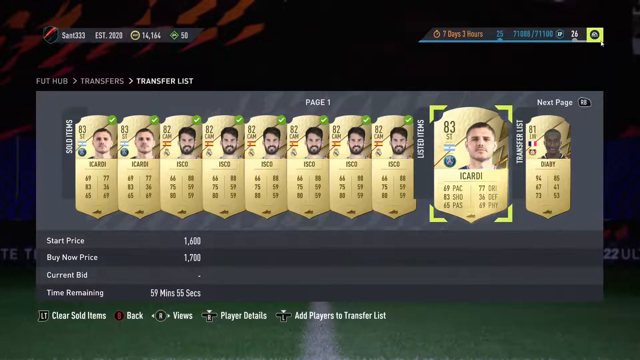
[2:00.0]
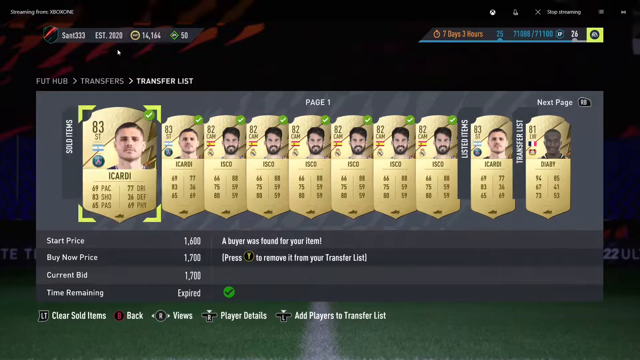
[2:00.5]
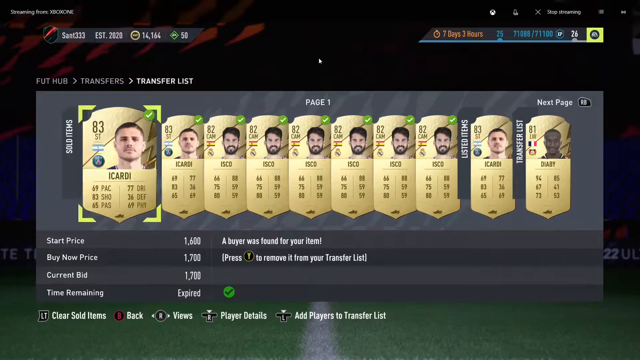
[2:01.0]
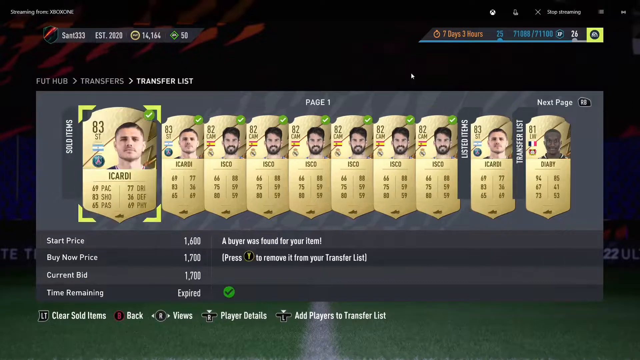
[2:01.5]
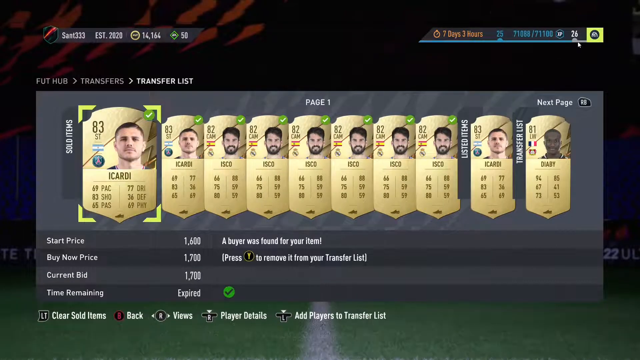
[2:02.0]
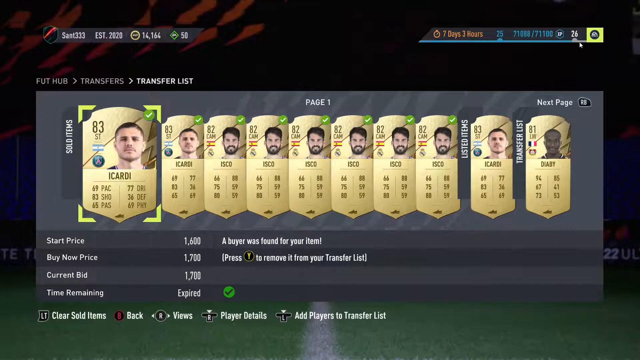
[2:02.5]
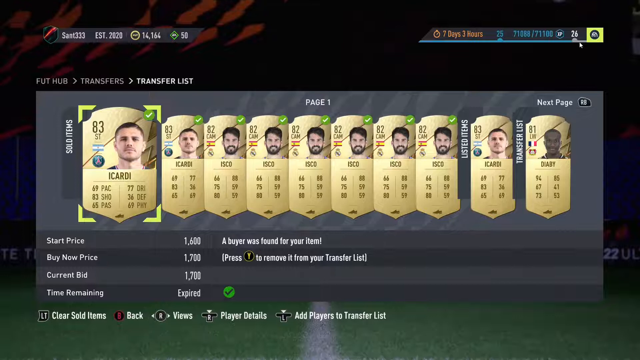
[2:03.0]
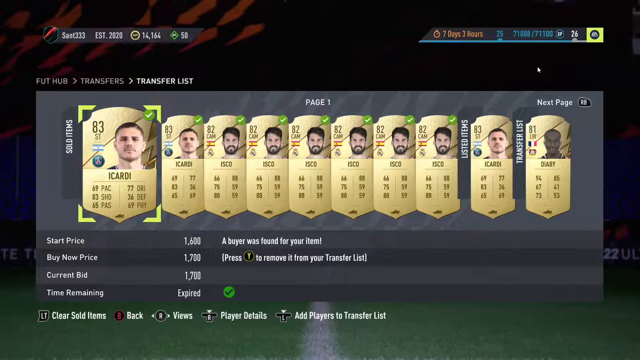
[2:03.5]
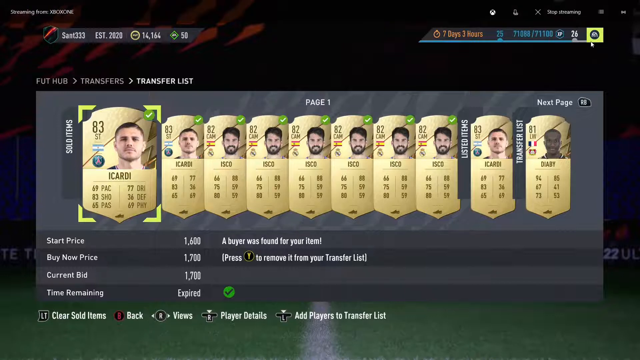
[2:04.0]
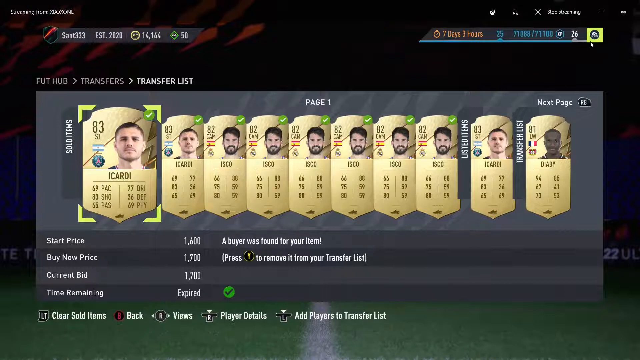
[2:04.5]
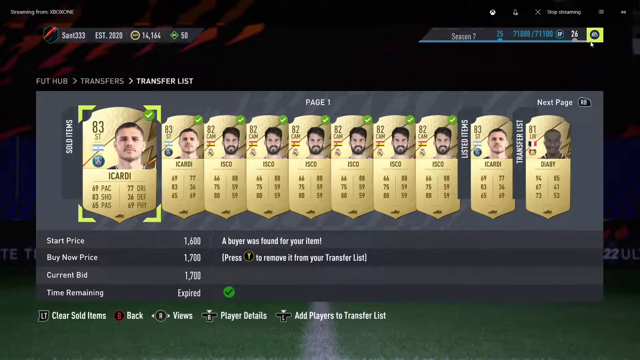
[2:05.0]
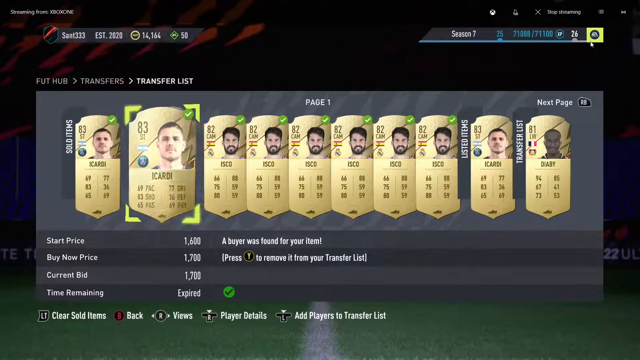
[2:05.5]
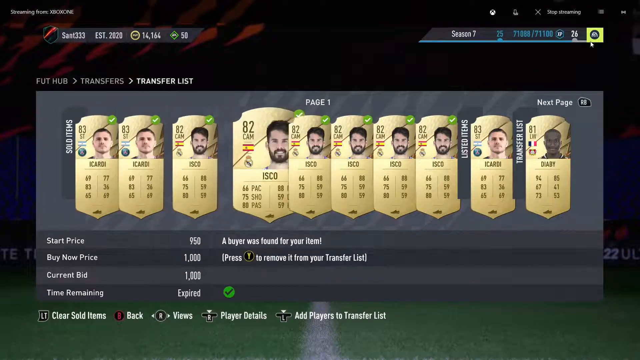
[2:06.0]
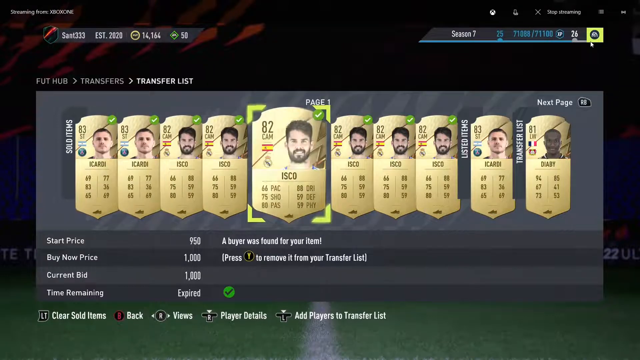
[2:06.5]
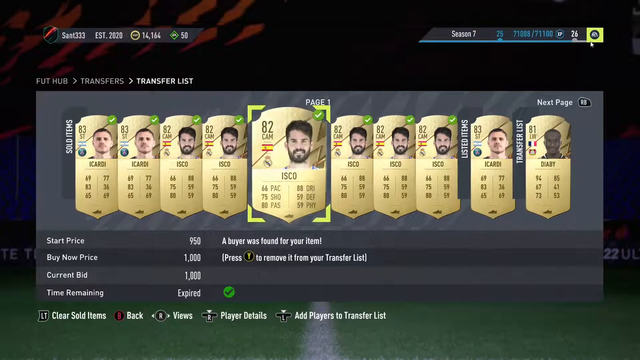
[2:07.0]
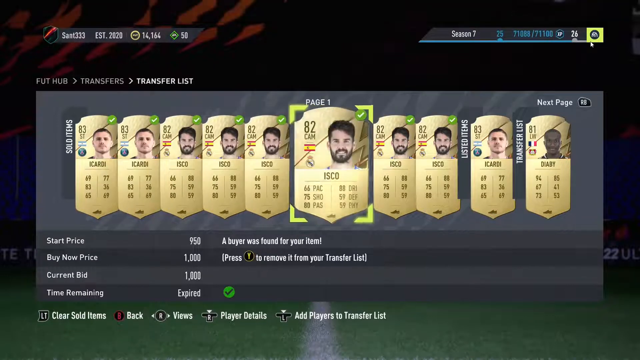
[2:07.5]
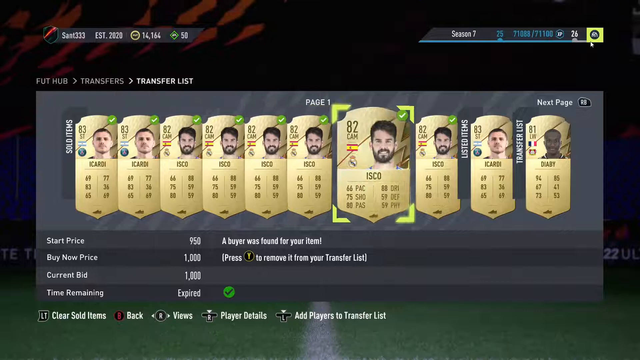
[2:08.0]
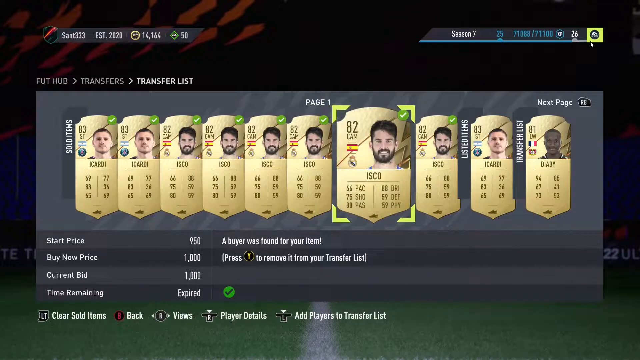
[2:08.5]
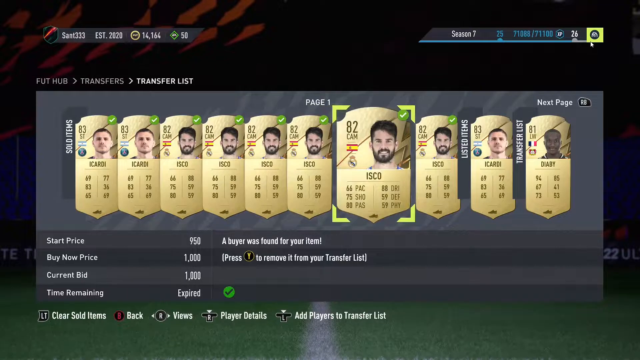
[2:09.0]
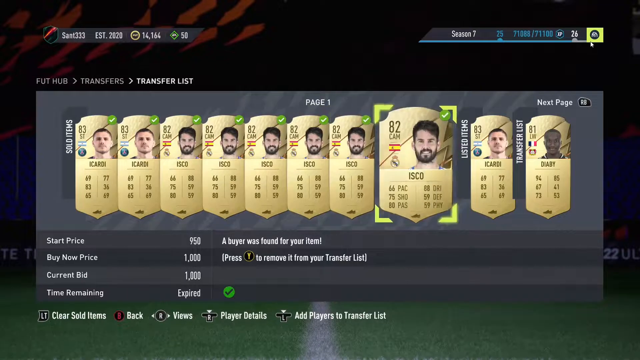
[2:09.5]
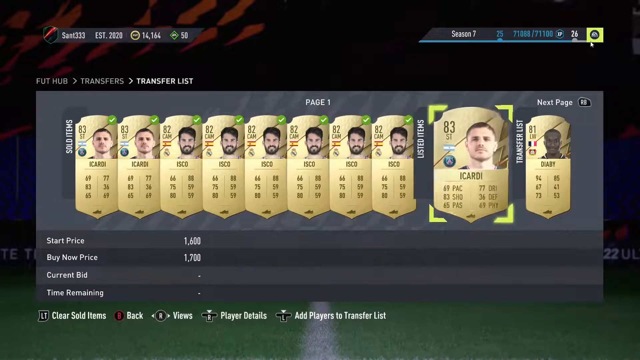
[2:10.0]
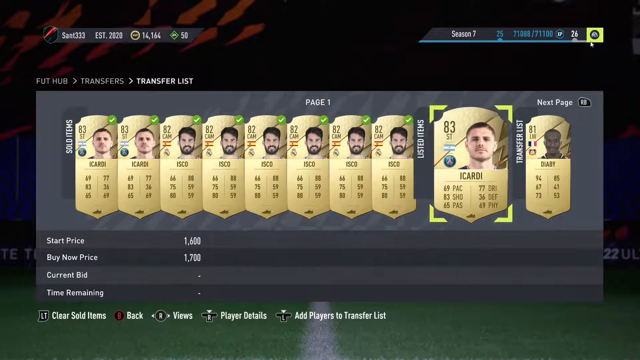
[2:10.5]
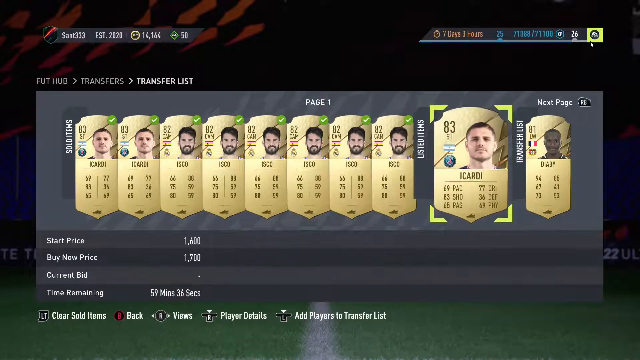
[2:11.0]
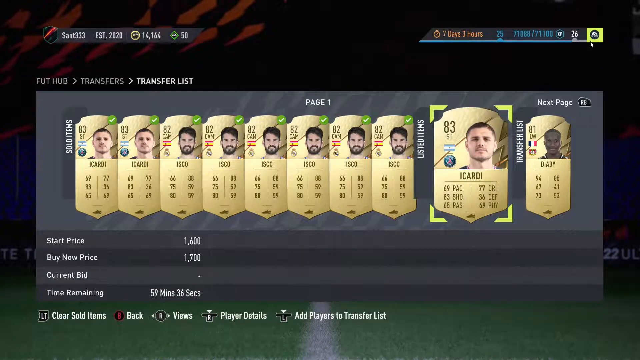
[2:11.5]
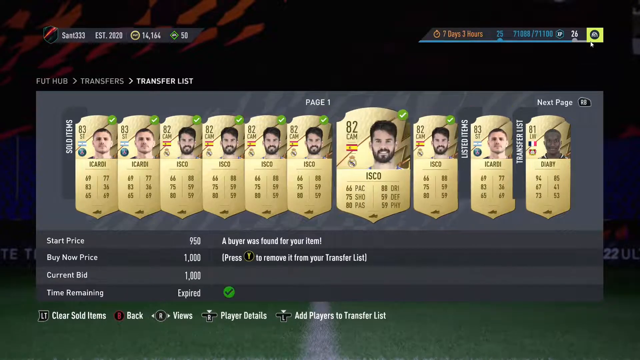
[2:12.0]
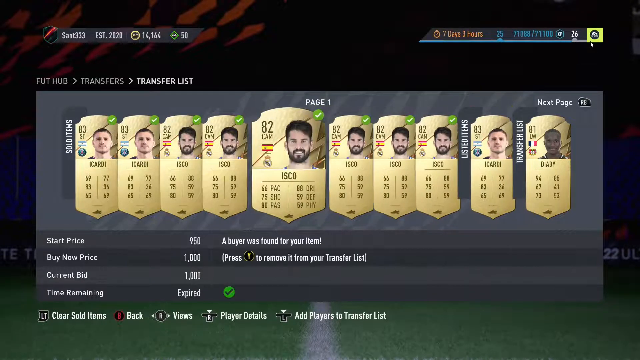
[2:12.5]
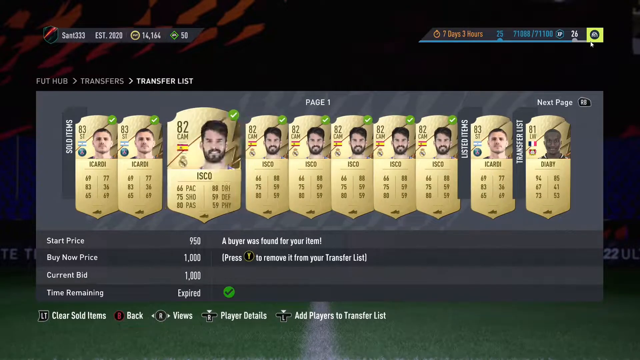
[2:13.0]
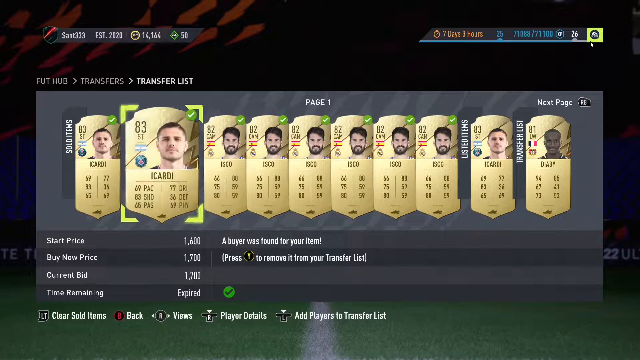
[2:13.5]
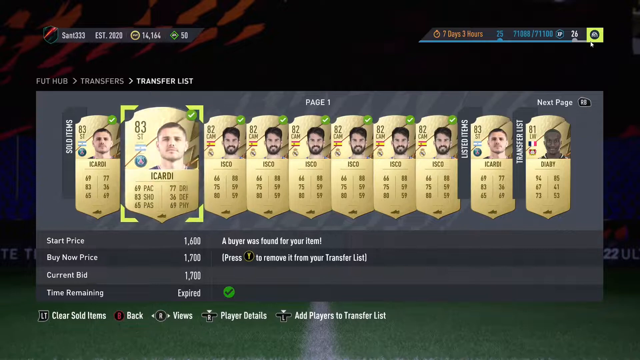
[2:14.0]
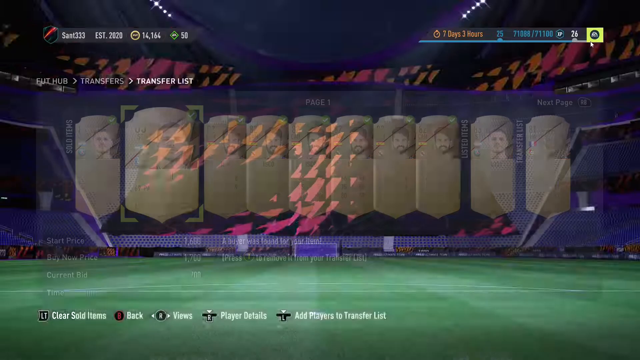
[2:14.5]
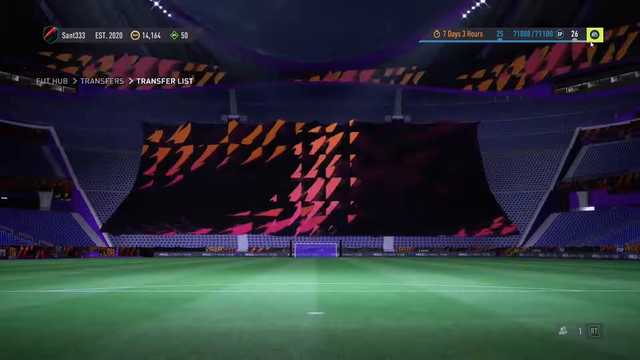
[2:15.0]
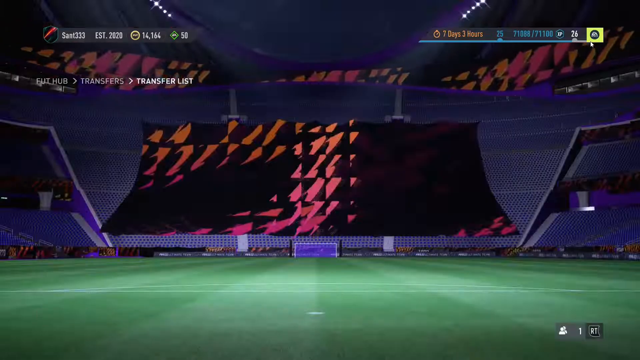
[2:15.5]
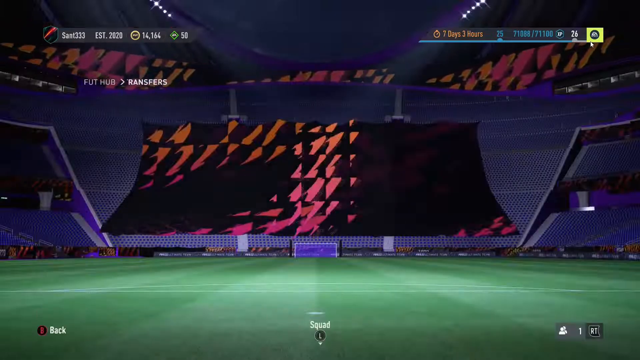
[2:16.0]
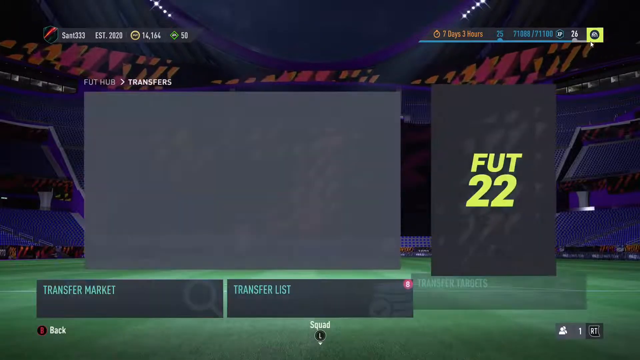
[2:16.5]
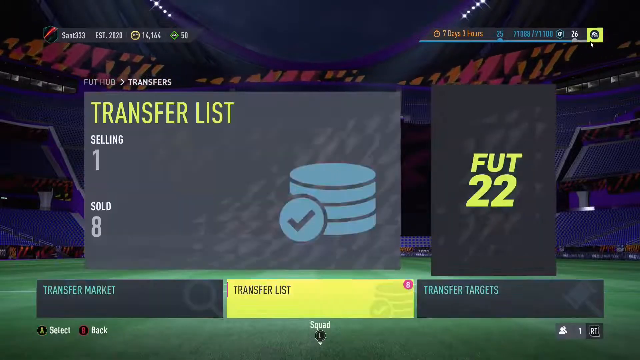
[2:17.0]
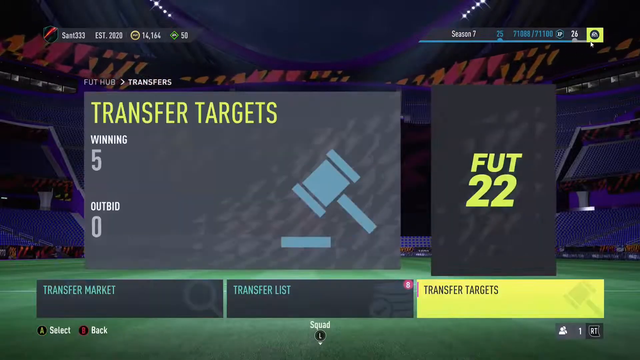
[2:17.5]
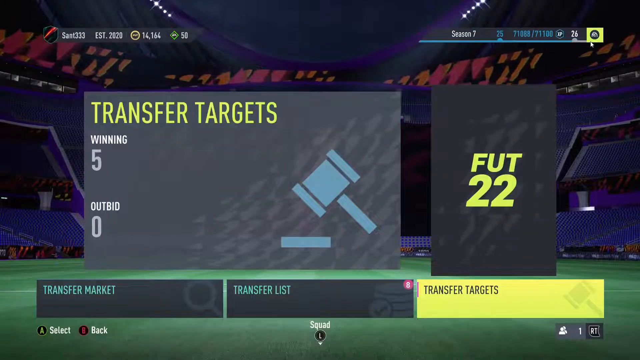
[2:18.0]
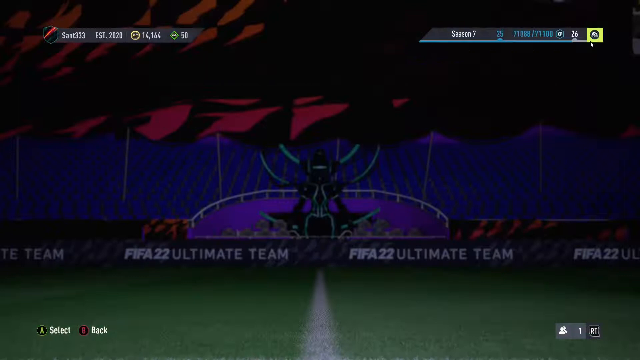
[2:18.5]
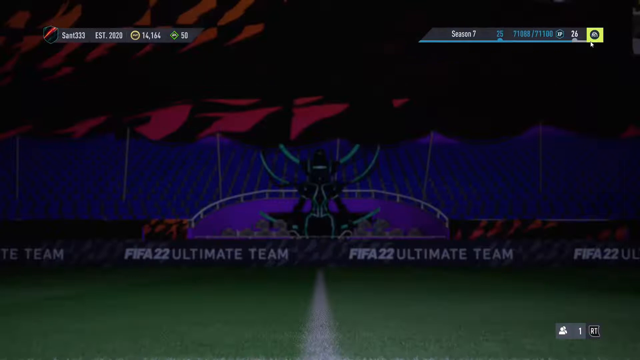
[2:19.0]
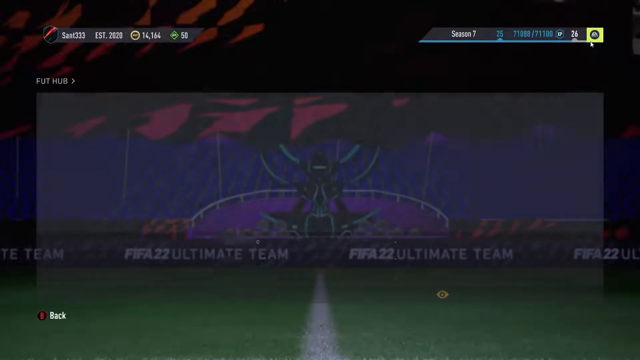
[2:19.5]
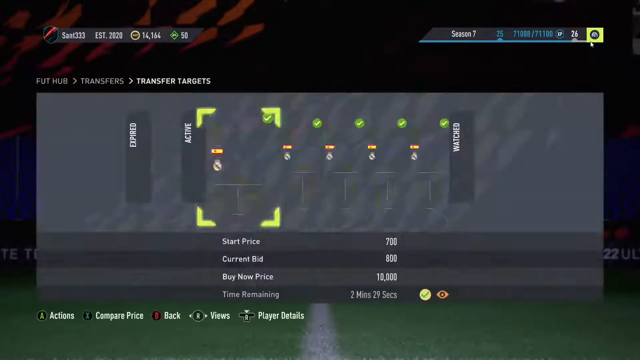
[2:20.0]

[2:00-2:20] The players are shown in the auction block: the Isco cards, the Icardi cards, and, in the transfer list, a new player with the last name Diaby, who is of African descent and appears to be from Belgium. Each player's country of origin is shown on the side of the portrait, along with club crests. Isco appears to be from Spain, and Icardi's flag appears to be either Lithuania's or Czechoslovakia's. While the players are scrolled through, the view backs out to the transfer list. This appears to be a tutorial on using the Ultimate Team transfer list and auction block.